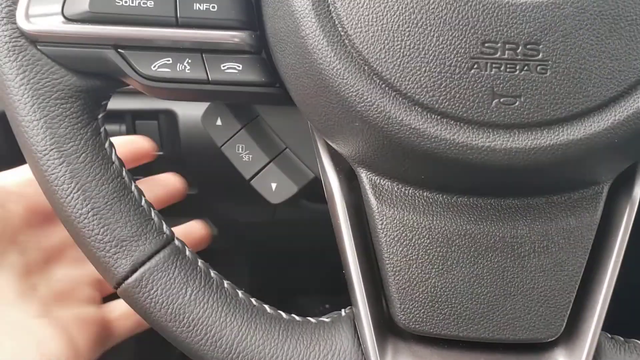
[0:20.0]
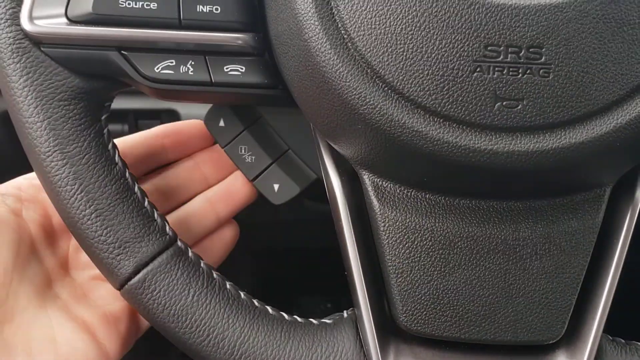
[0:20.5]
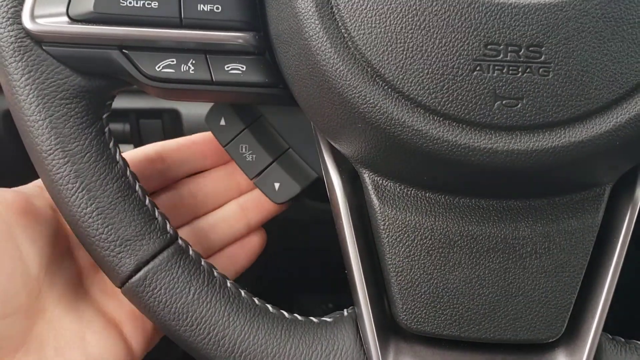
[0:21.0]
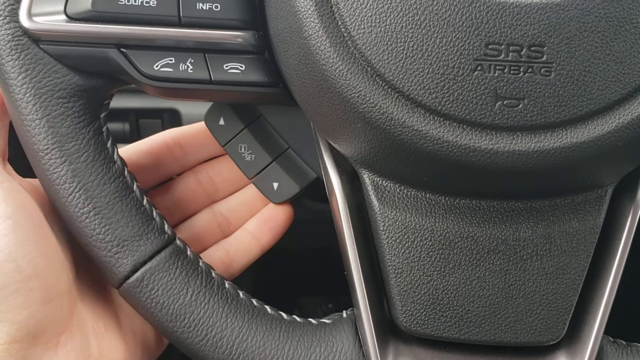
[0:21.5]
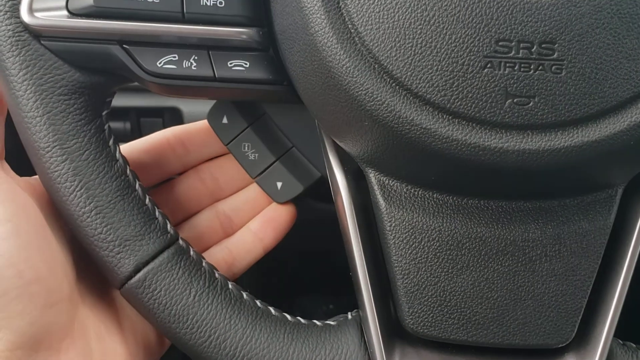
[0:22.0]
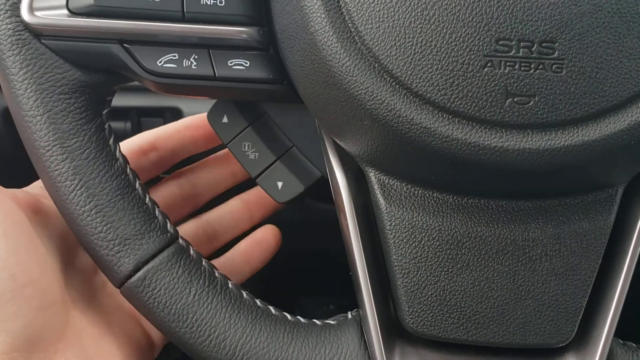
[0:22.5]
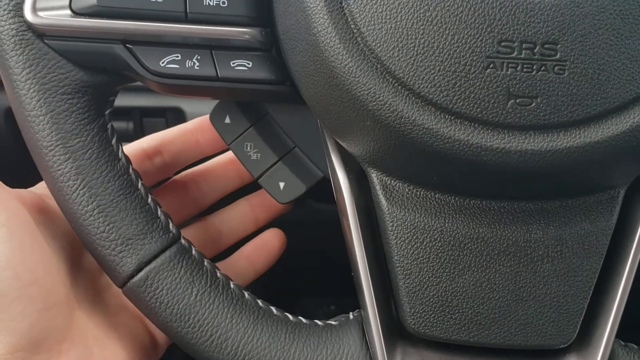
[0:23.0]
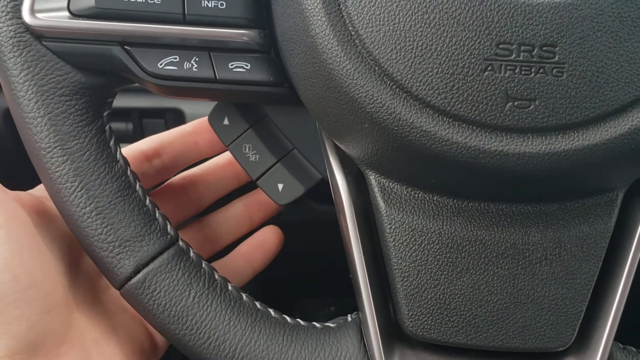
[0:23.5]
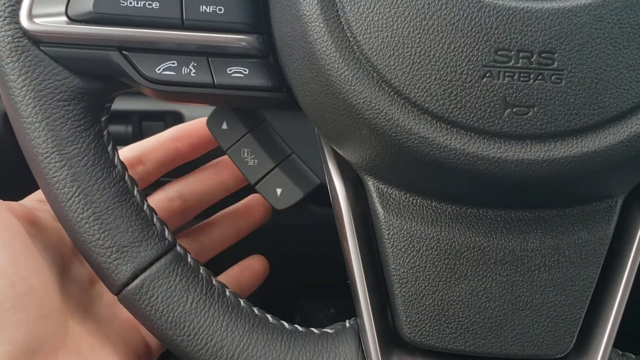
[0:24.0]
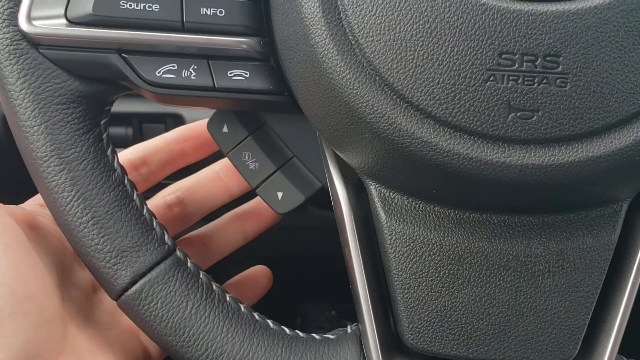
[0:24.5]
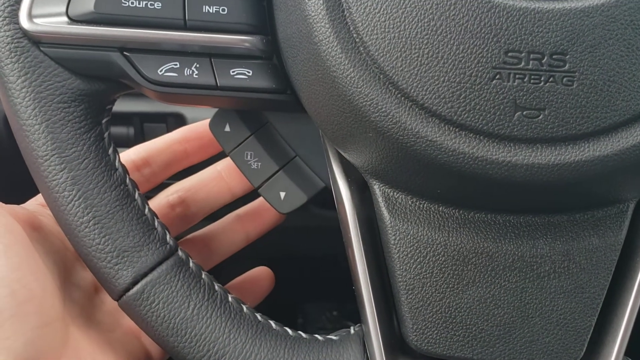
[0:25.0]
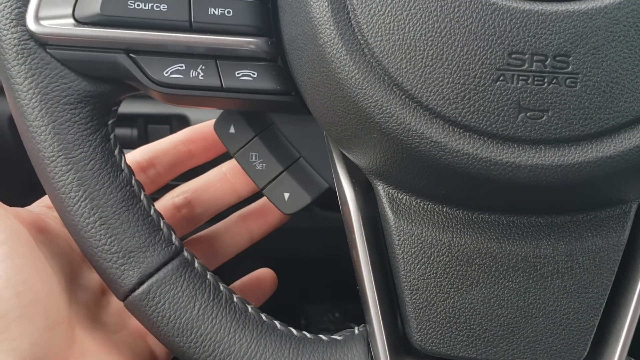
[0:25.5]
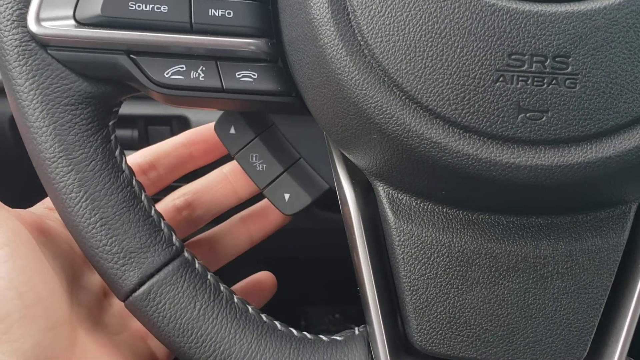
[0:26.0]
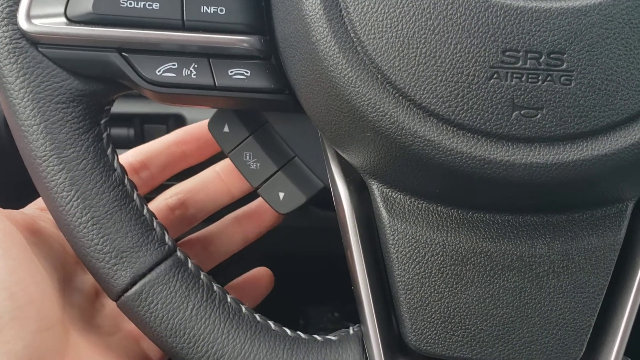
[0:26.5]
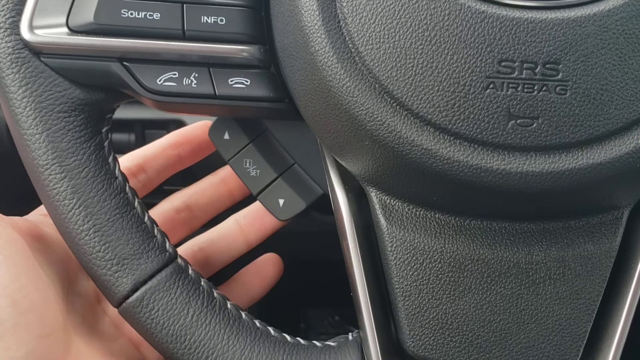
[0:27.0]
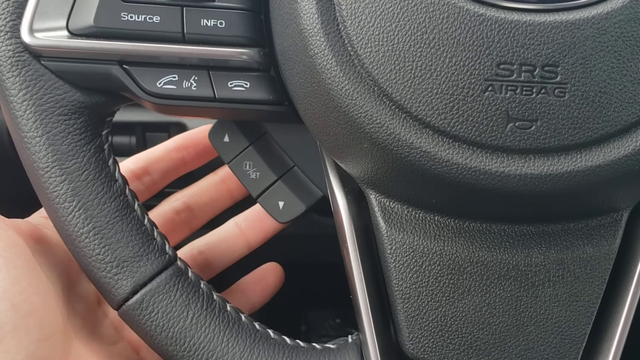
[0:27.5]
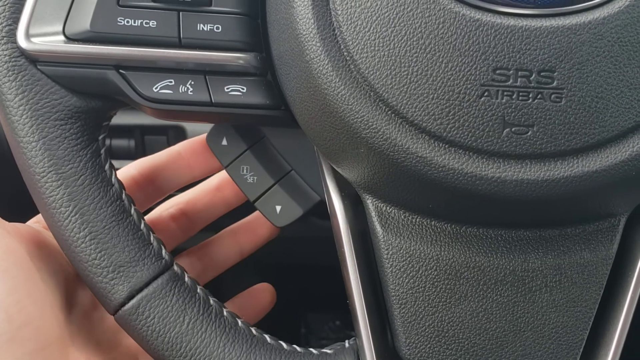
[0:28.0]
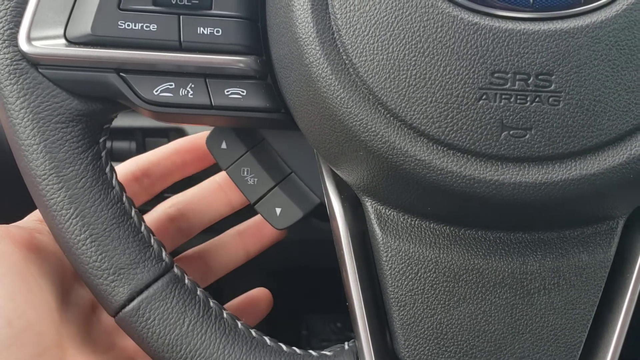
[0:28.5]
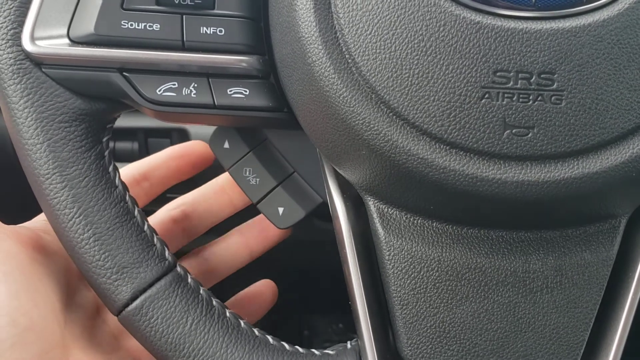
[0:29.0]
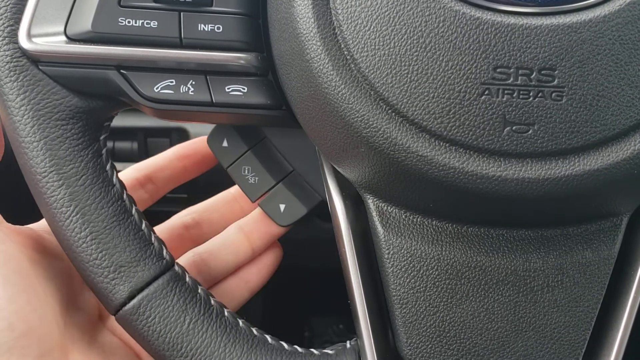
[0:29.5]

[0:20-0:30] The person's left hand appears, using all the fingers, with the thumb kind of touching the back of it. The fingers are under buttons that have an arrow on each side. The person appears to be demonstrating how to do something with the buttons.